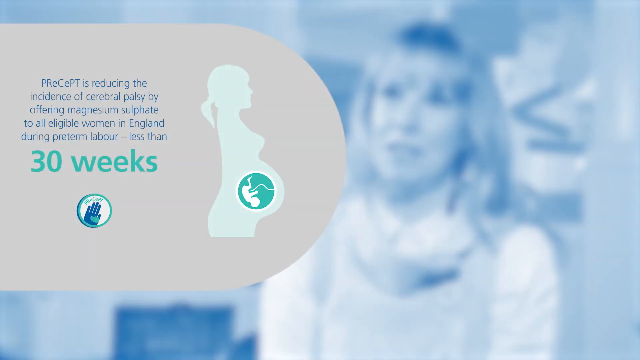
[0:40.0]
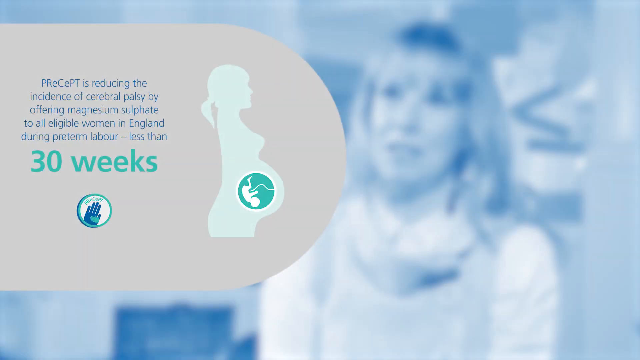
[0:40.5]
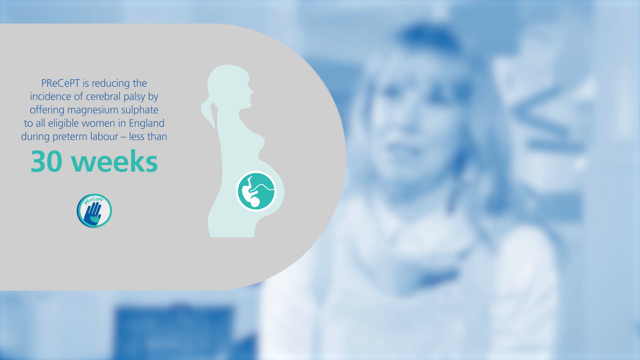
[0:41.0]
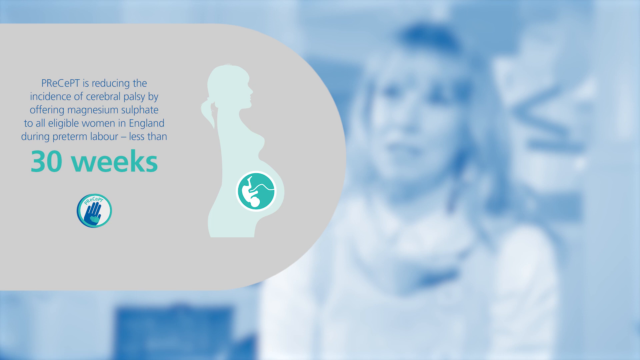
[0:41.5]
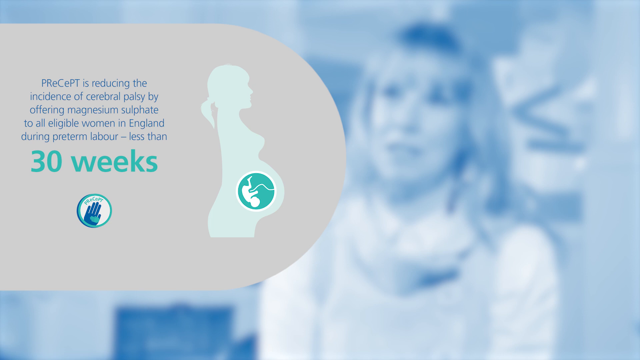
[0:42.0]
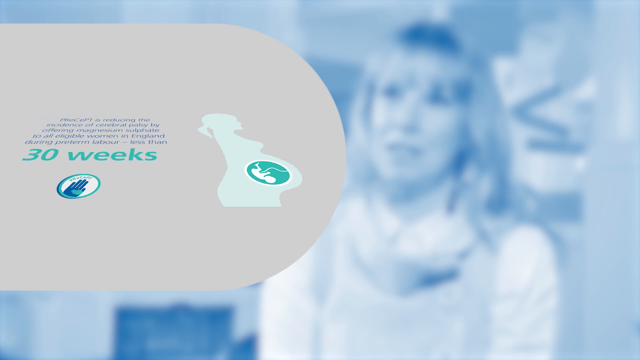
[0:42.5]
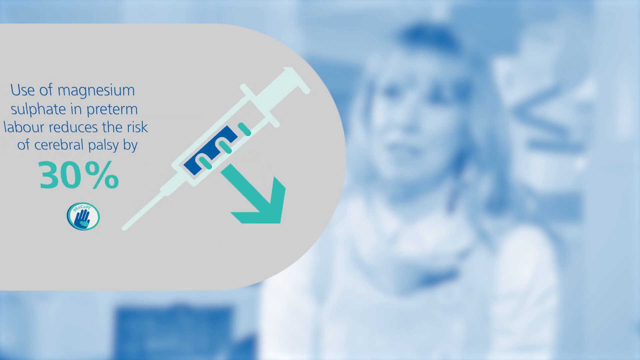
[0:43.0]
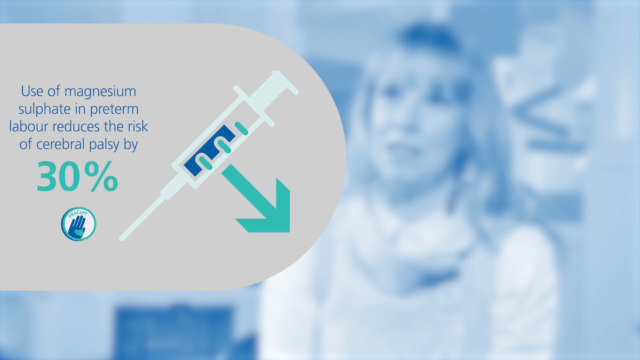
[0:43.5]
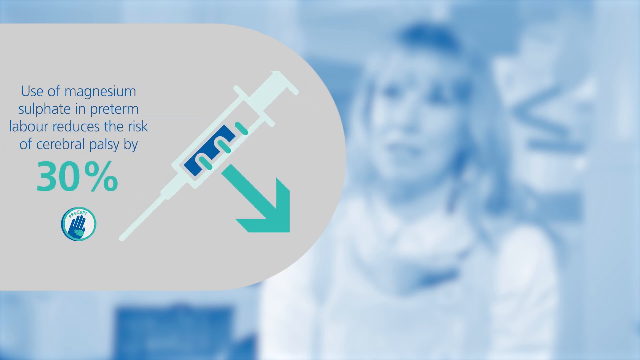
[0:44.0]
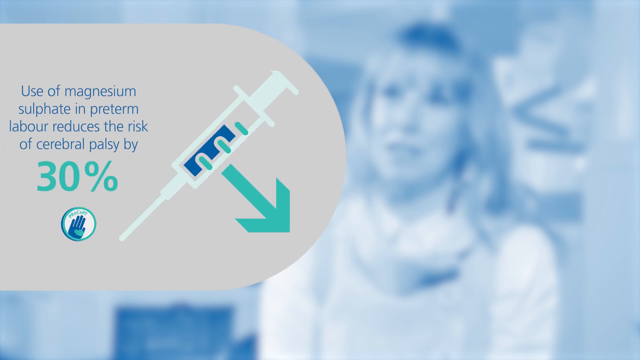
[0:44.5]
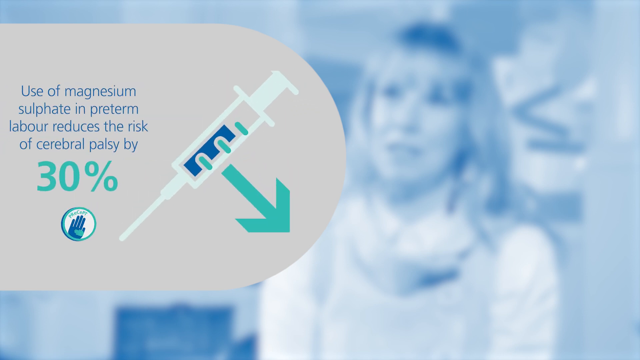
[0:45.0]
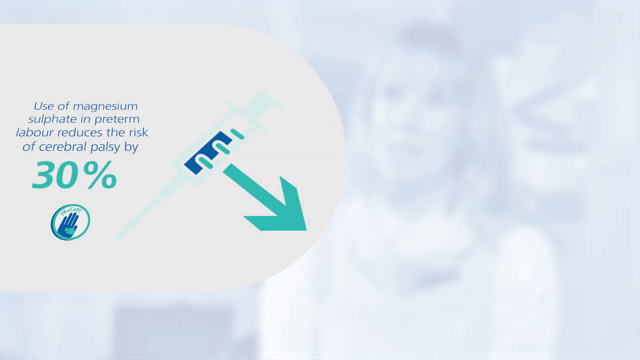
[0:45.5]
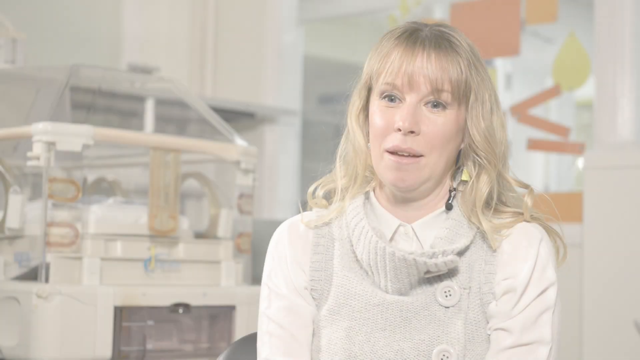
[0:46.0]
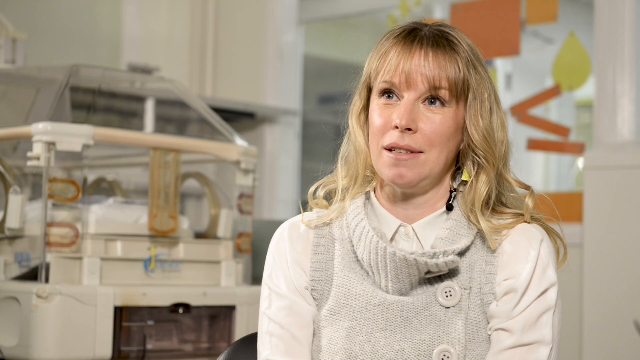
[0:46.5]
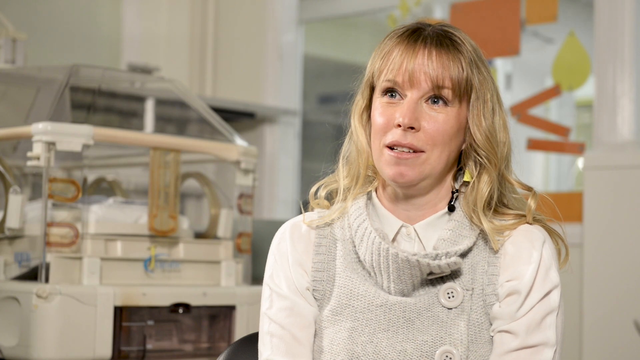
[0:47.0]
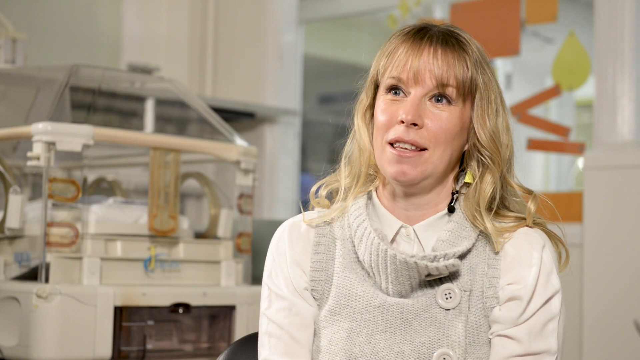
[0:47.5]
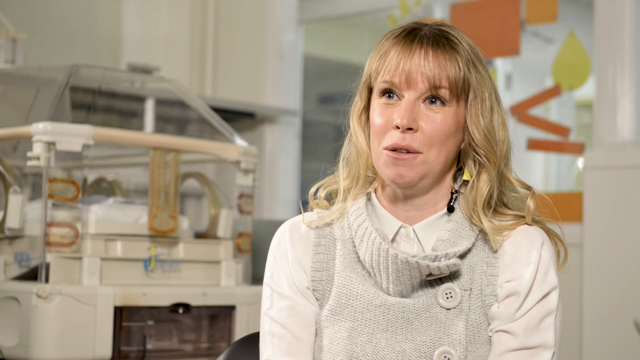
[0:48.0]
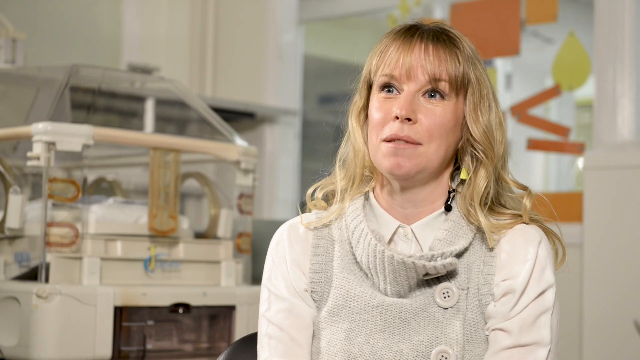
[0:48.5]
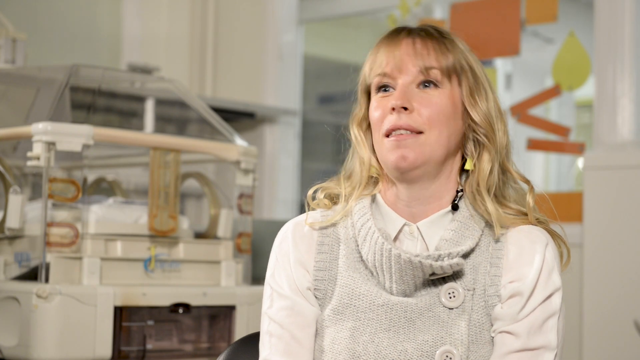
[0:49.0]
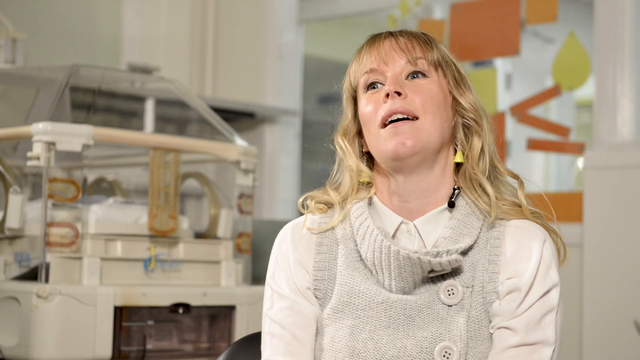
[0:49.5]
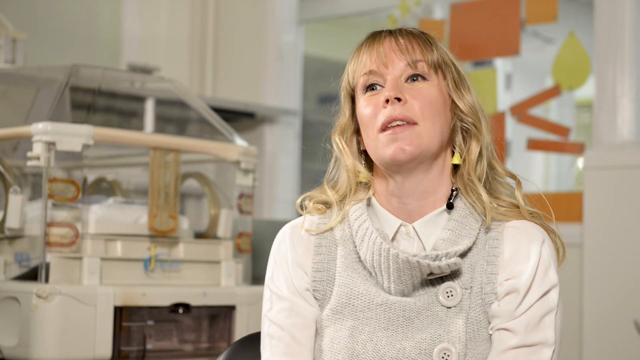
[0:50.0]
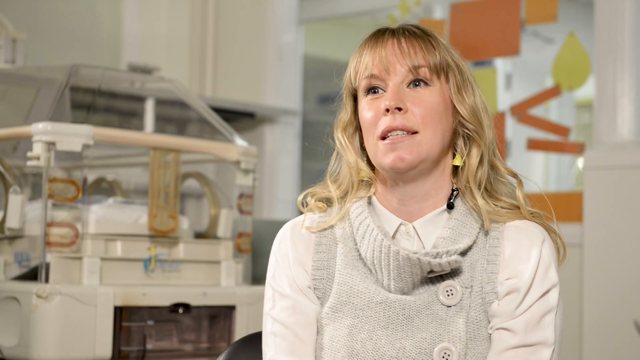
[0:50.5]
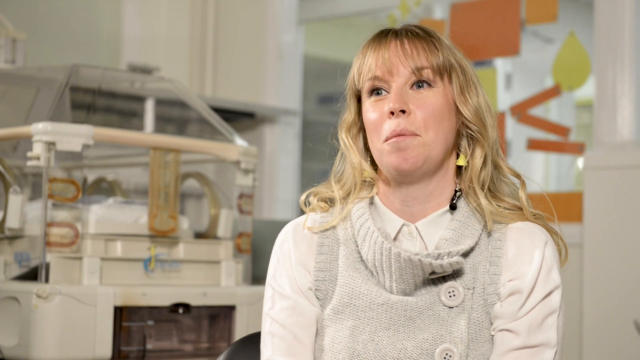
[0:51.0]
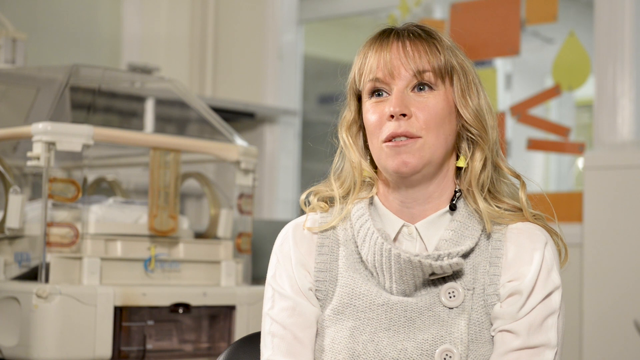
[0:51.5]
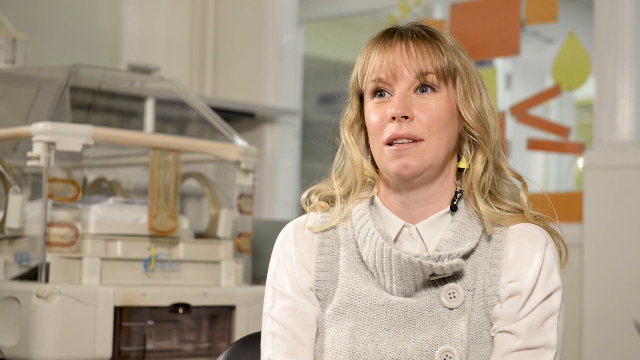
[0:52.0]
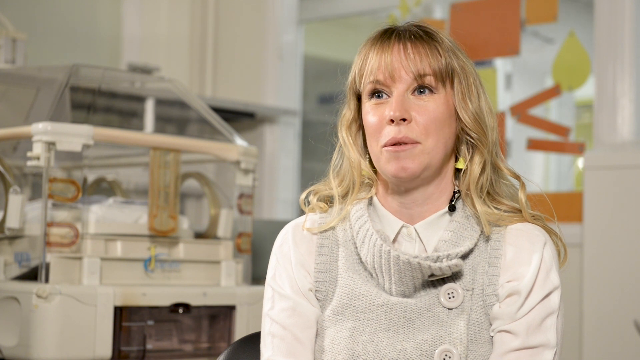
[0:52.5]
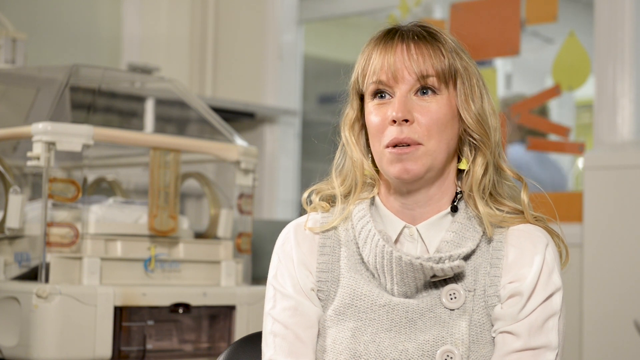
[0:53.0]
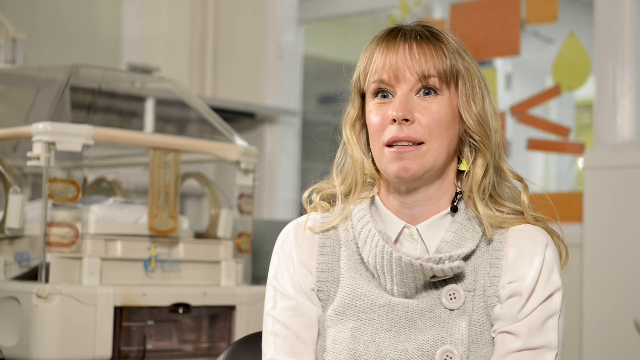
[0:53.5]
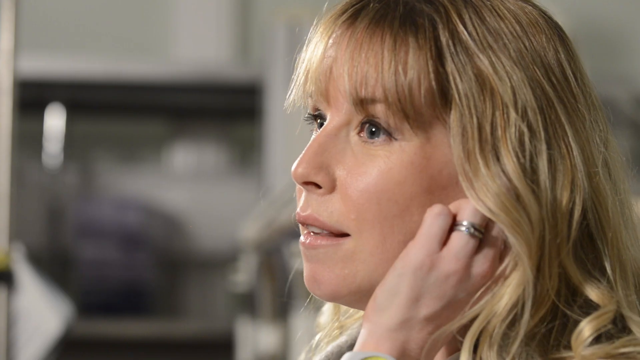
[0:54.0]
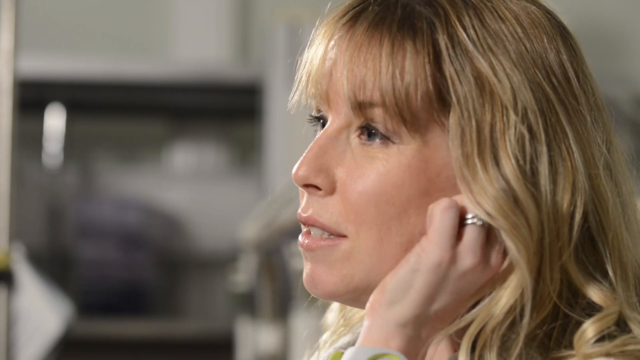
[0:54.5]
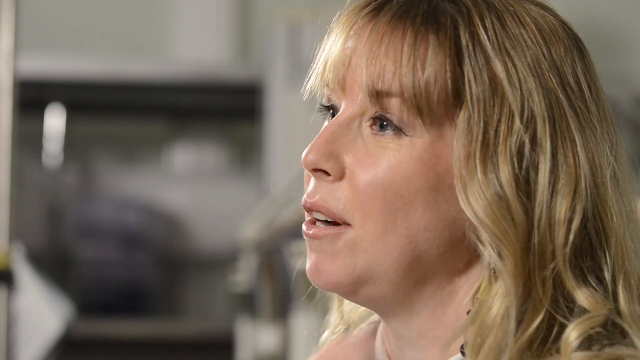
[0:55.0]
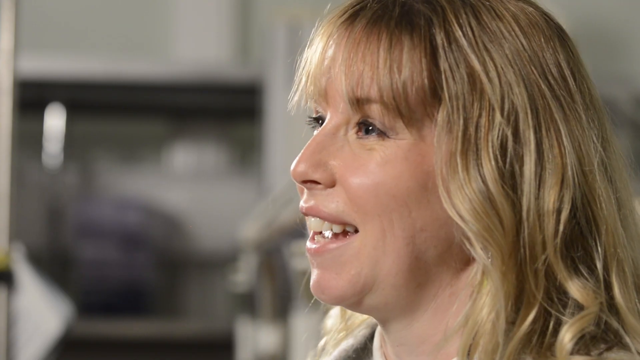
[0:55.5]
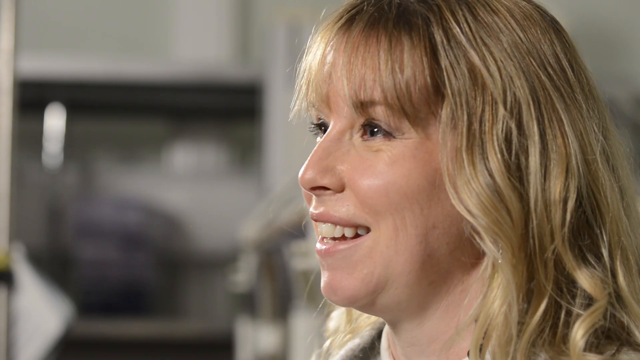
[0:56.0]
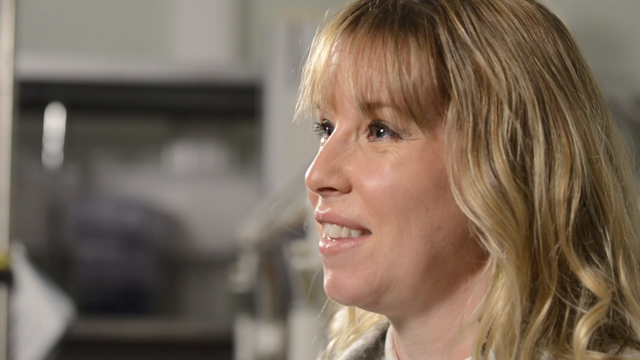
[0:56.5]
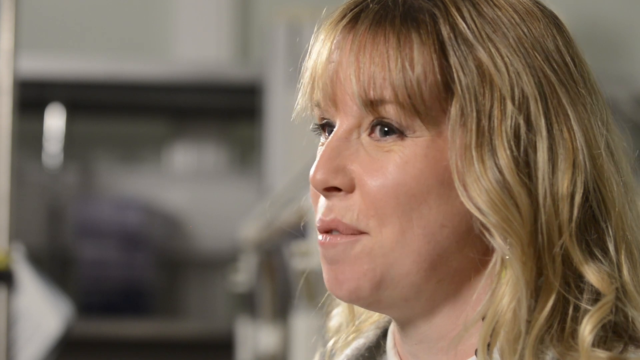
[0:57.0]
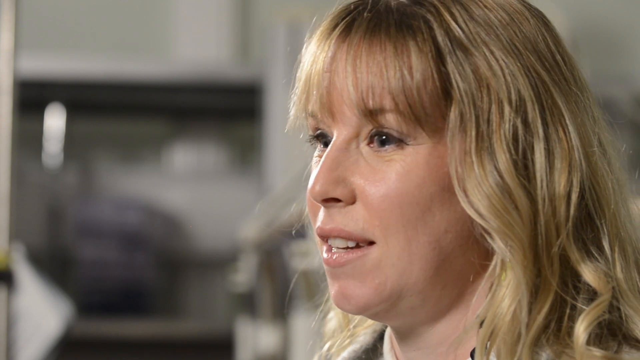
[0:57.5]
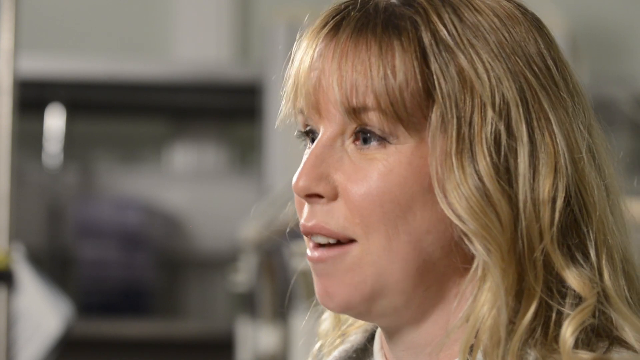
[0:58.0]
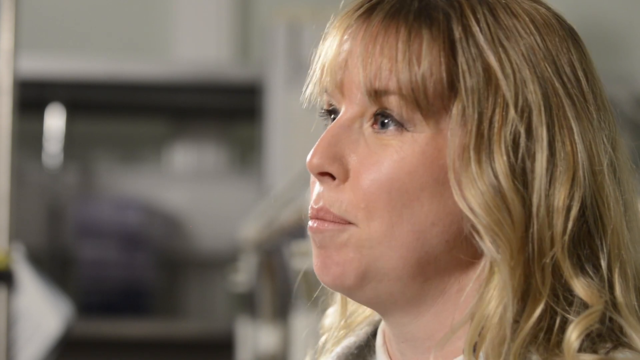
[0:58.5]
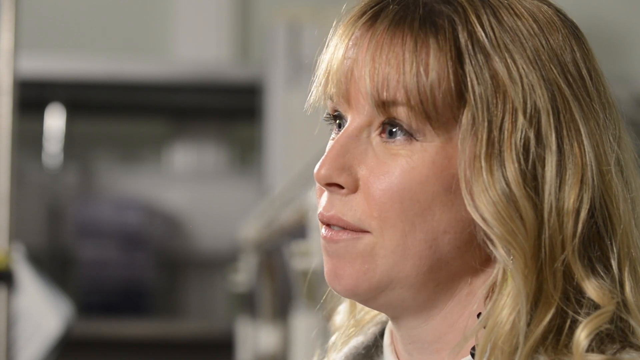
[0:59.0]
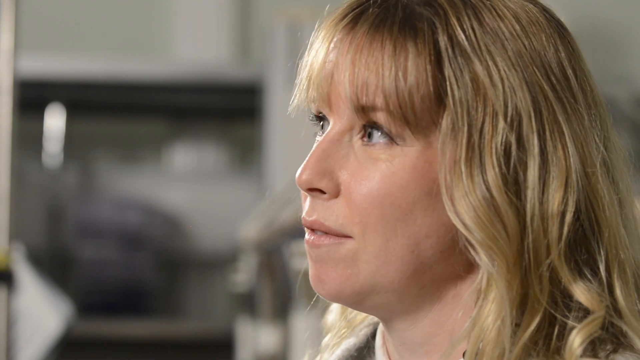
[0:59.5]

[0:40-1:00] An infographic with a grey rounded border appears on screen on top of the picture of Jenny, which has gone transparent so she can no longer be seen clearly. It reads "PRECEPT is reducing the incidence of cerebral palsy by offering magnesium sulfate to all eligible women in England during preterm labor less than 30 weeks", with "30 weeks" in bright blue and a picture of a pregnant lady to the right. The next infographic reads "use of magnesium sulfate in preterm labor reduces the risk of cerebral palsy by 30%", with a picture of a needle to the right and an arrow pointing rightward. Jenny then reappears on screen, speaking, as nurses go past in the background. The camera cuts to a different angle much more zoomed in on her face; she touches her ear quite a bit while speaking and is the only person in the room in shot.